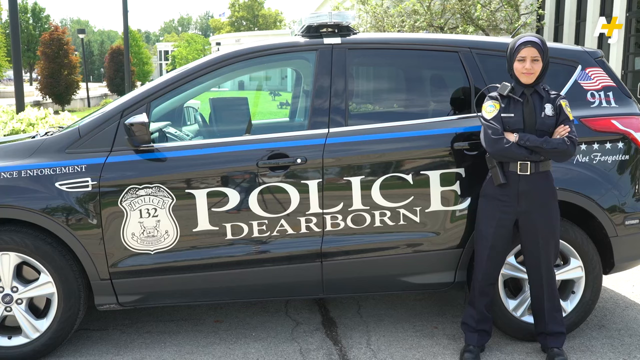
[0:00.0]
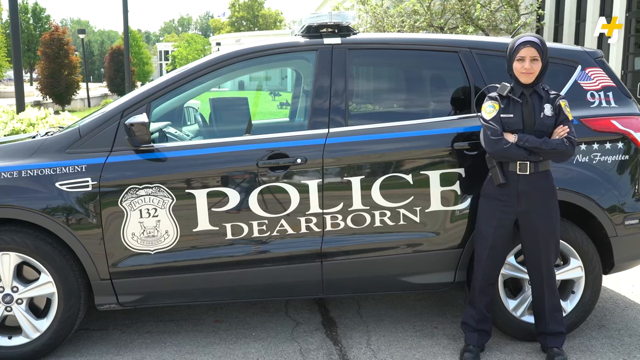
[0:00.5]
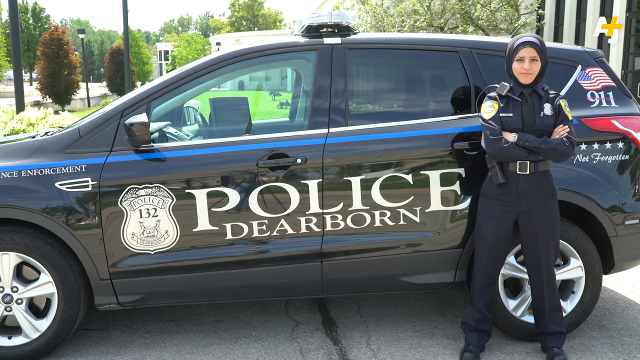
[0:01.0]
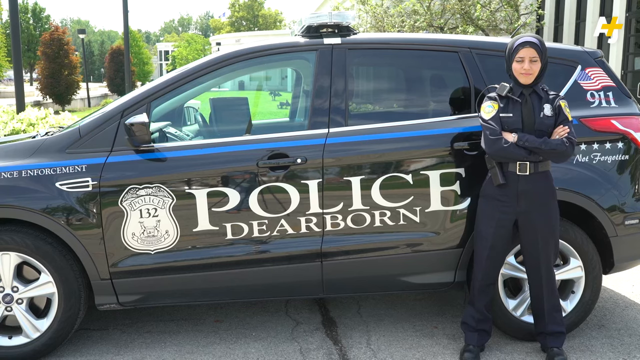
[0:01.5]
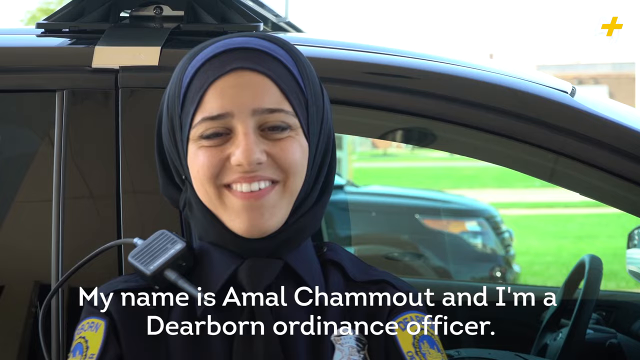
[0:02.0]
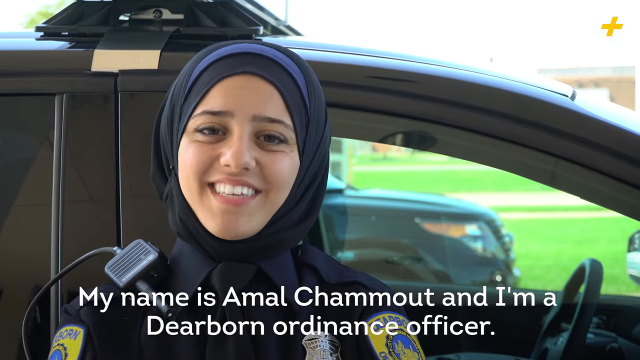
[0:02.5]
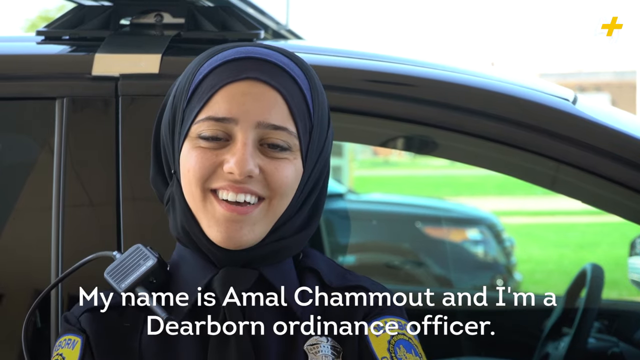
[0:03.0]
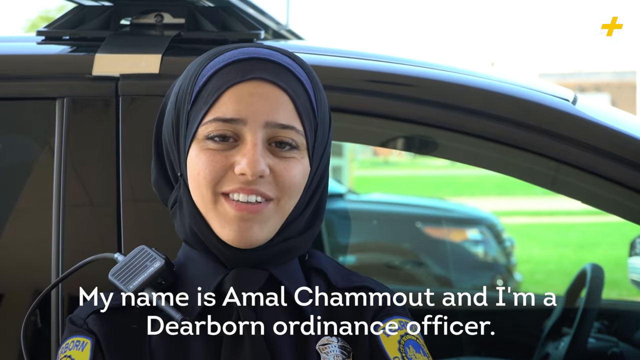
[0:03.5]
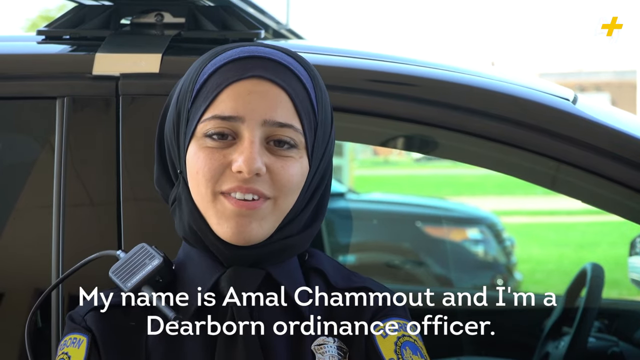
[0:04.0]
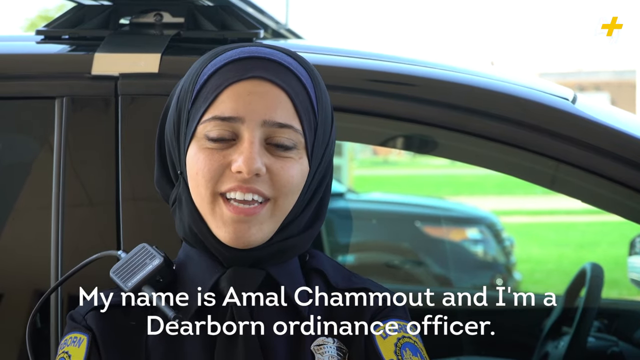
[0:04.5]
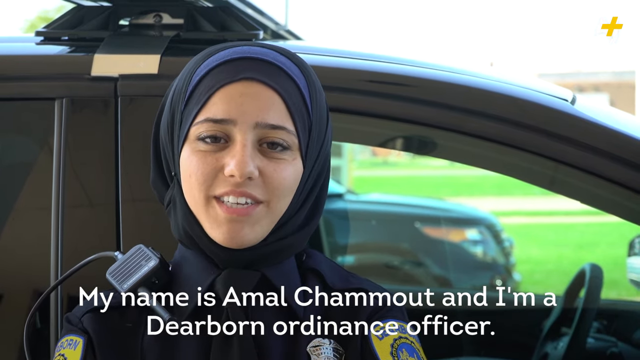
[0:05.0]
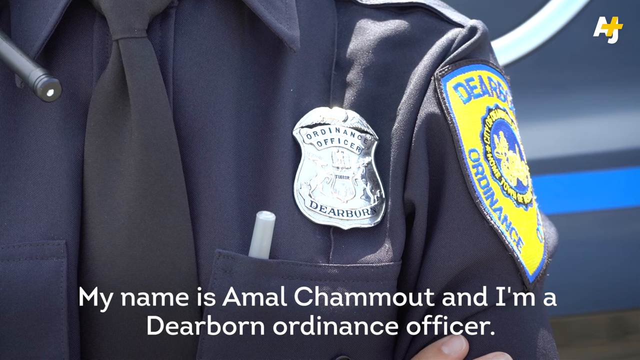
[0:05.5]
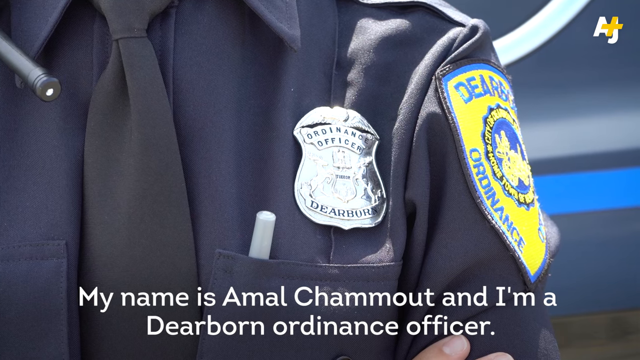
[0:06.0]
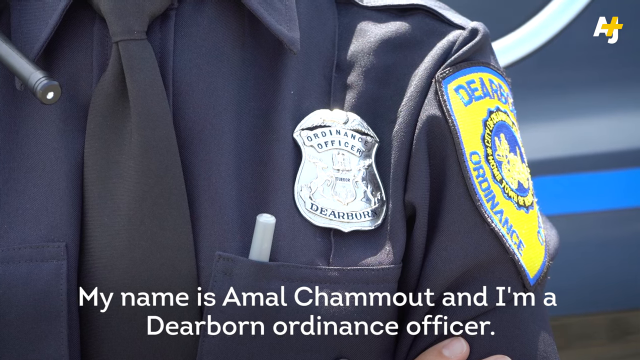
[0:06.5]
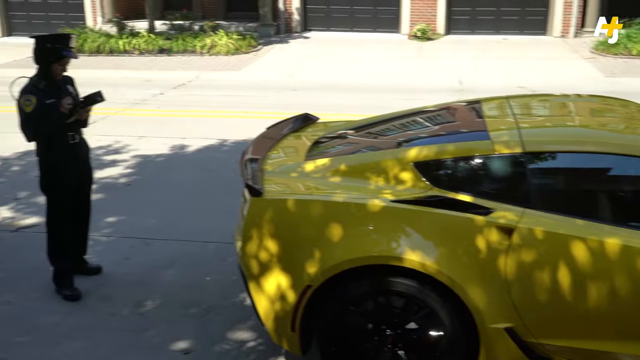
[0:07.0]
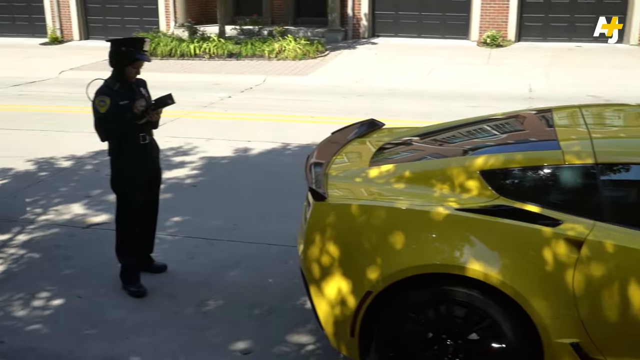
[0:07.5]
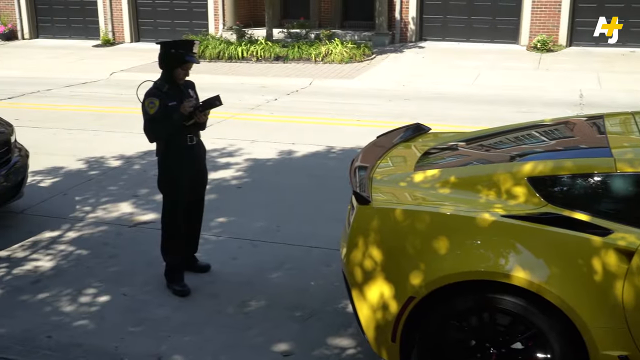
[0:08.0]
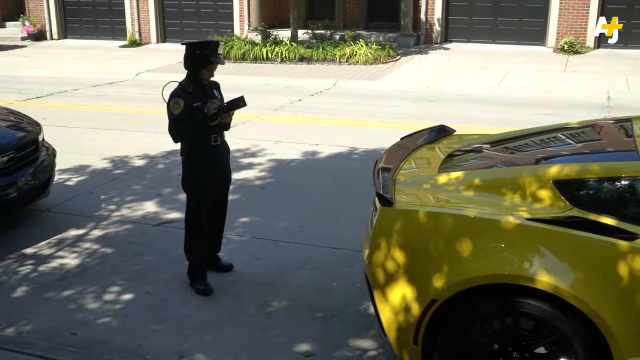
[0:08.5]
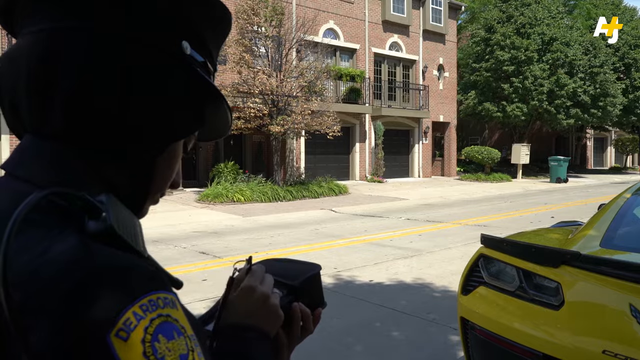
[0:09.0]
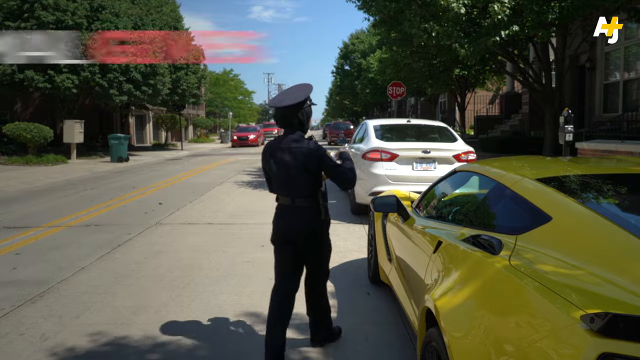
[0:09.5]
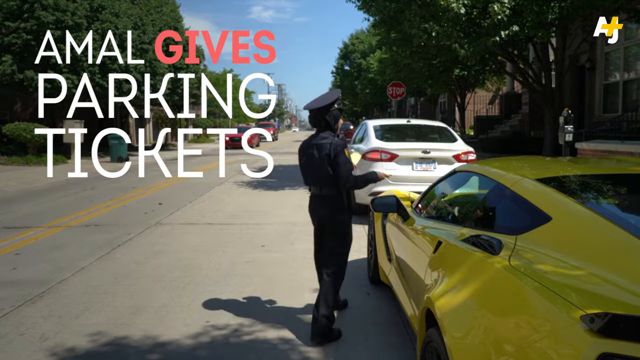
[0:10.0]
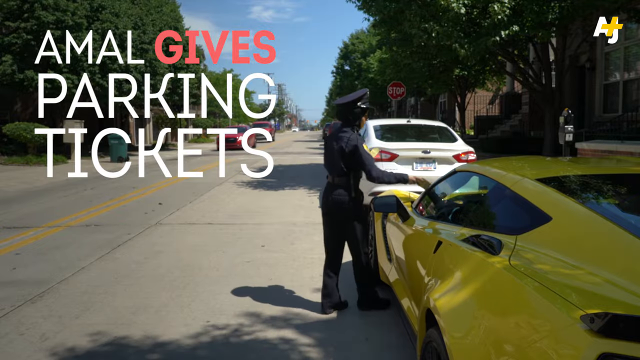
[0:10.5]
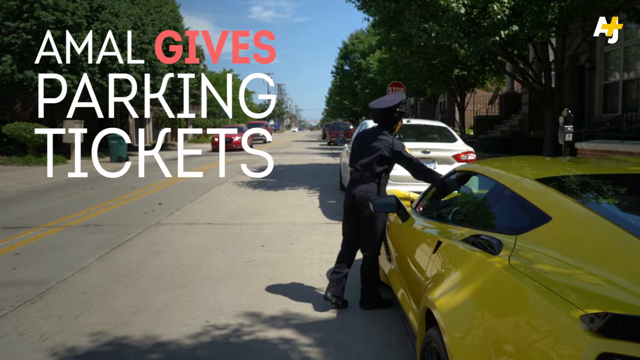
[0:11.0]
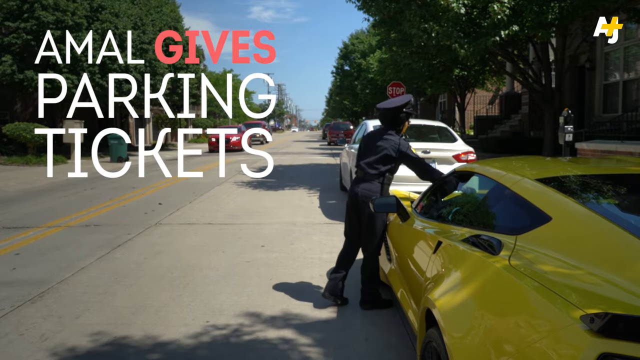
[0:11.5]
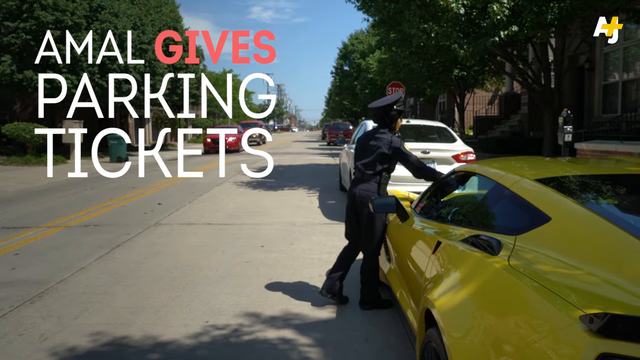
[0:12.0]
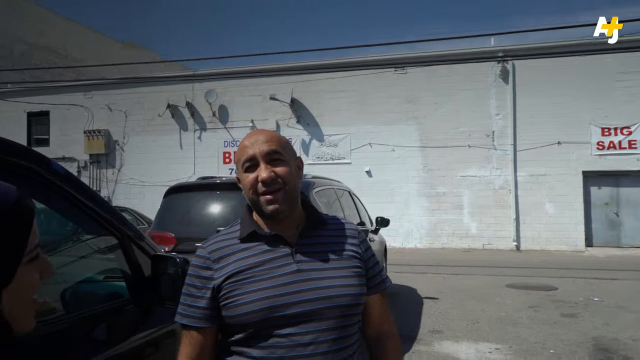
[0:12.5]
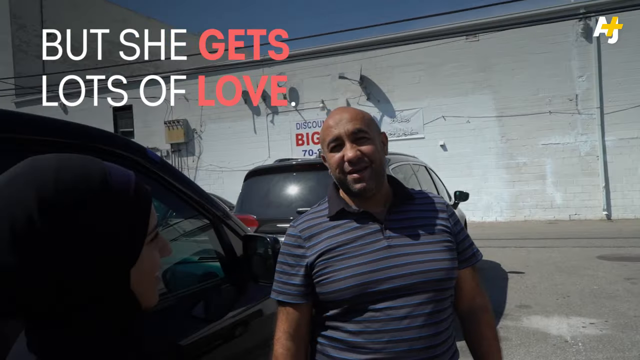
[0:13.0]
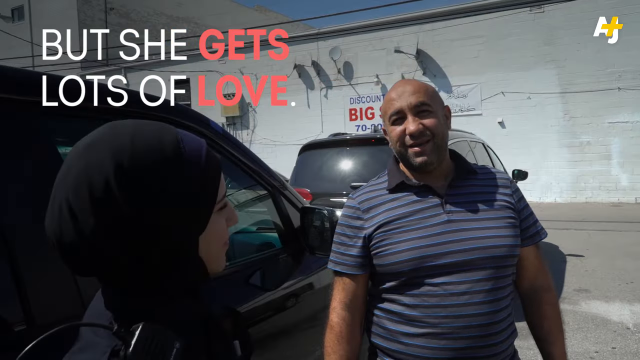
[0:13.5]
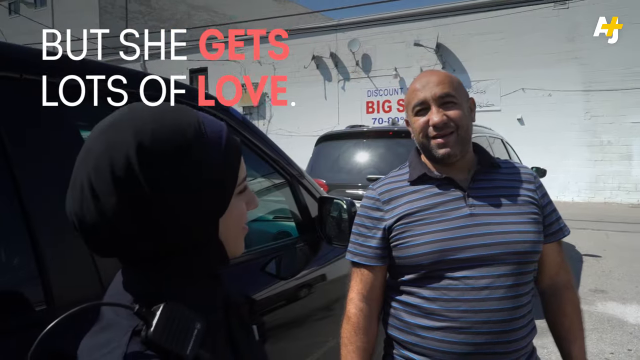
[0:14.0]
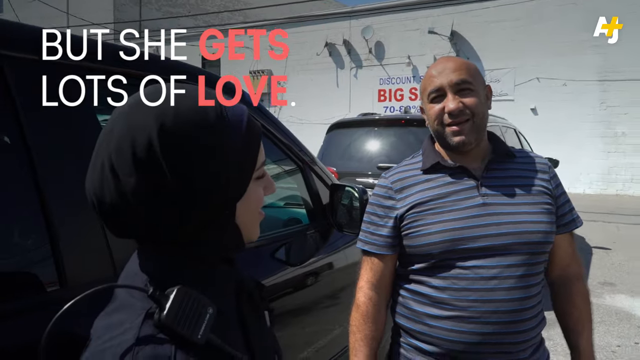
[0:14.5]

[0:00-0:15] The video appears to be a story about a practicing Muslim police officer who wears a hijab, apparently about how she balances her religion with her job. Her name is Amal Chammout; she is from Dearborn and is an ordinance officer. Text says "she gets lots of love". She appears to be giving a ticket to some kind of very high-end sports vehicle. She looks cheerful and friendly. The scene is outdoors and well lit.